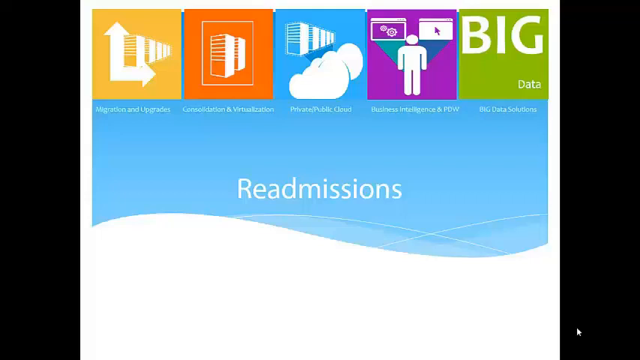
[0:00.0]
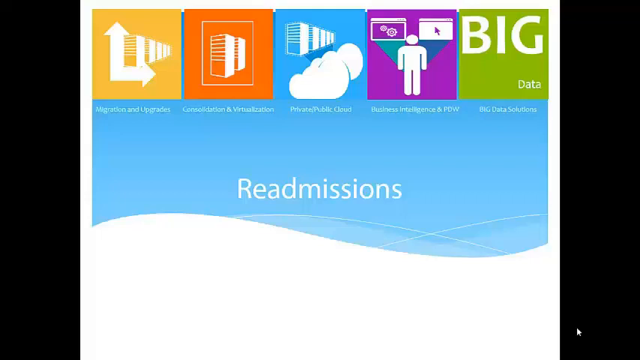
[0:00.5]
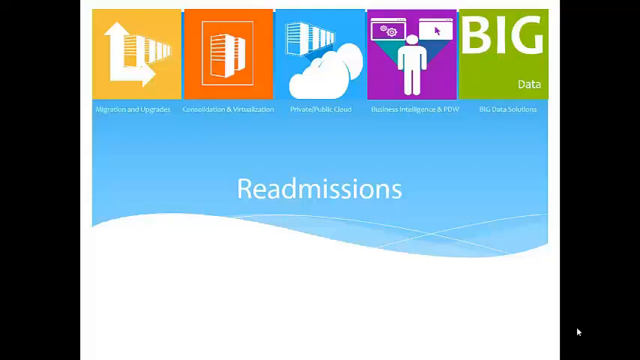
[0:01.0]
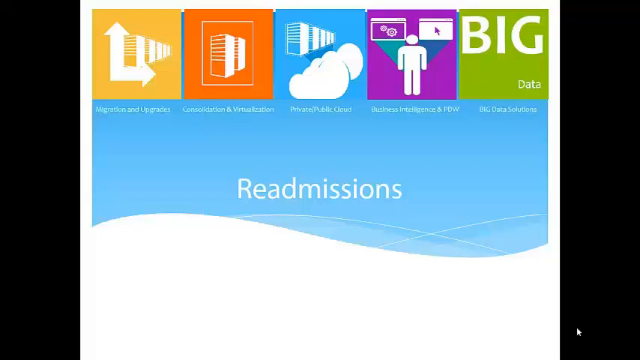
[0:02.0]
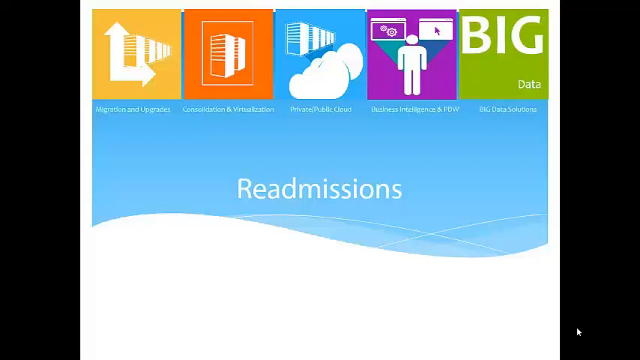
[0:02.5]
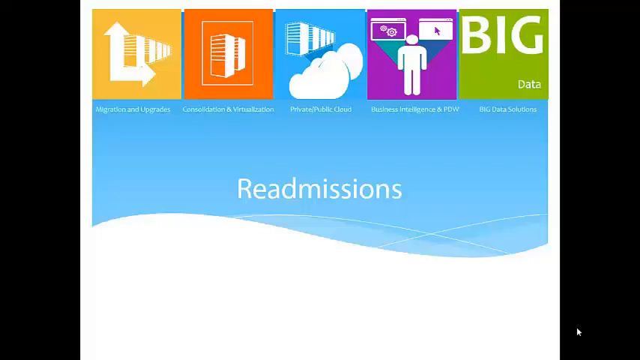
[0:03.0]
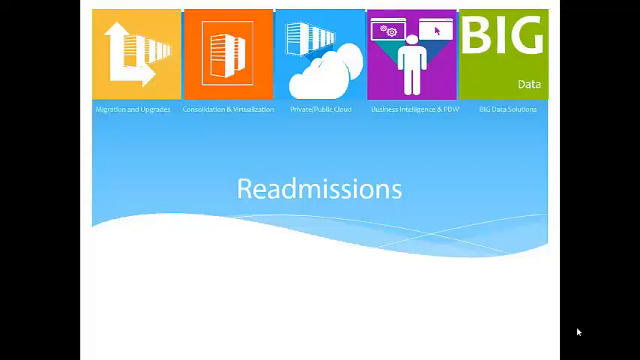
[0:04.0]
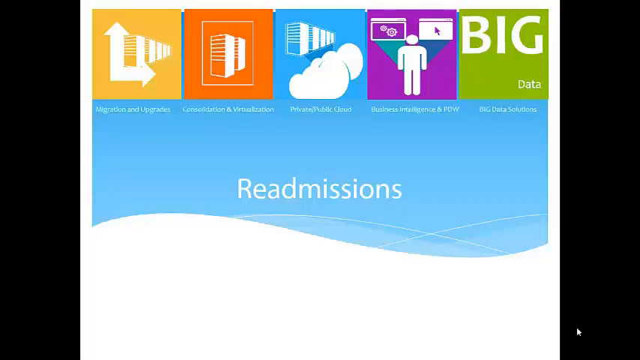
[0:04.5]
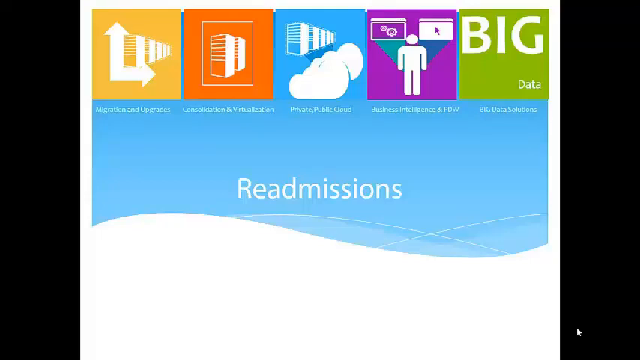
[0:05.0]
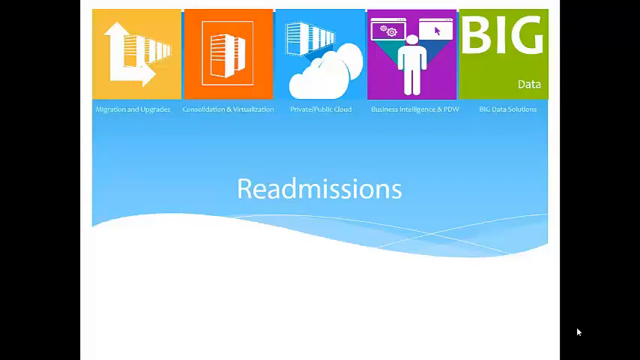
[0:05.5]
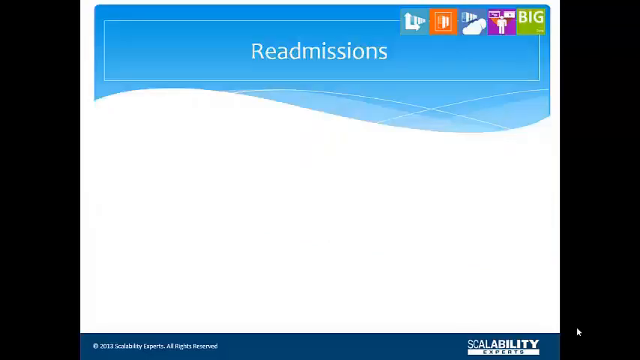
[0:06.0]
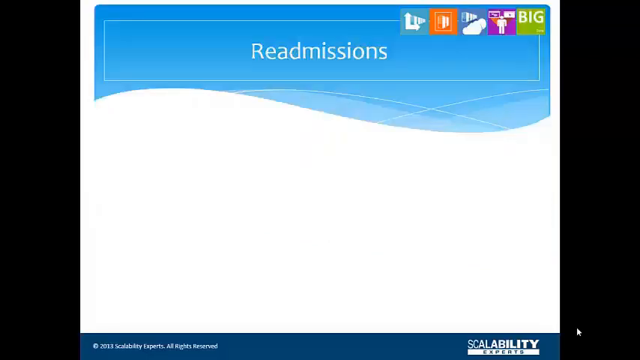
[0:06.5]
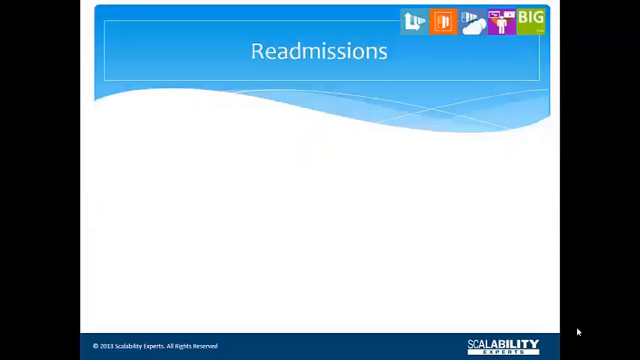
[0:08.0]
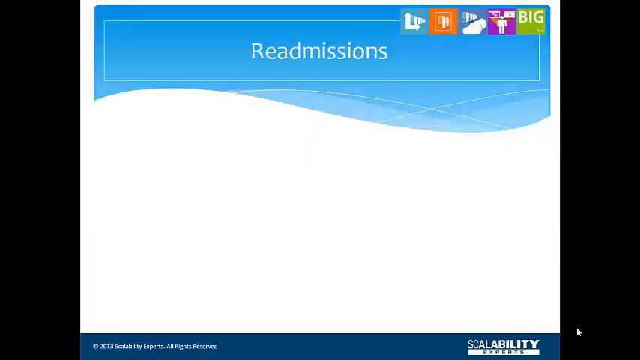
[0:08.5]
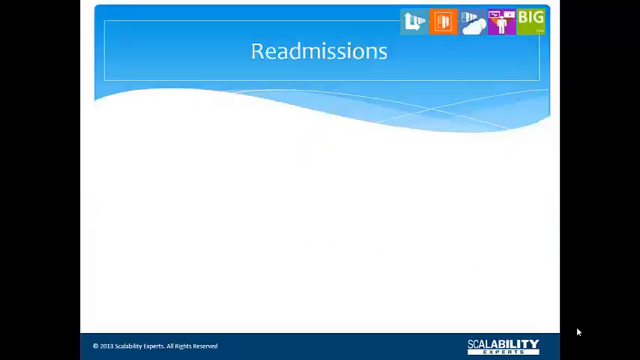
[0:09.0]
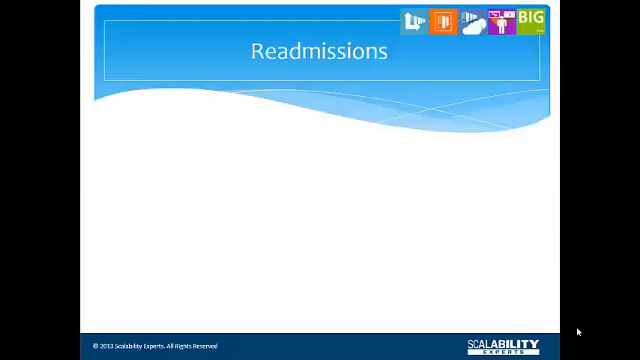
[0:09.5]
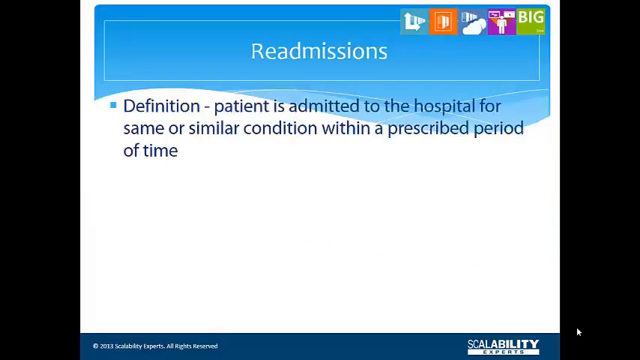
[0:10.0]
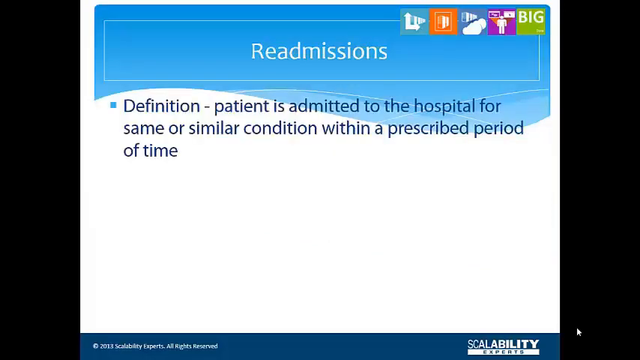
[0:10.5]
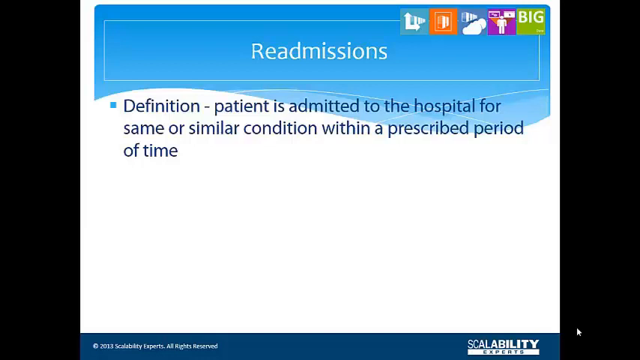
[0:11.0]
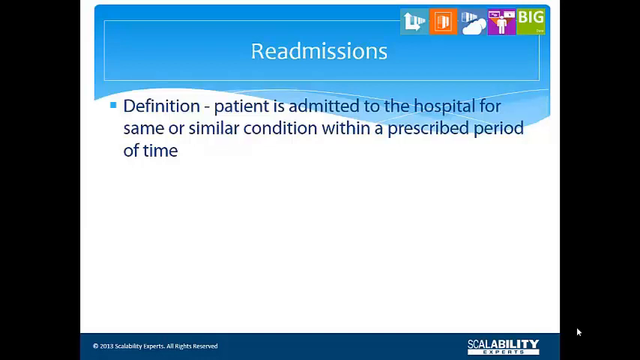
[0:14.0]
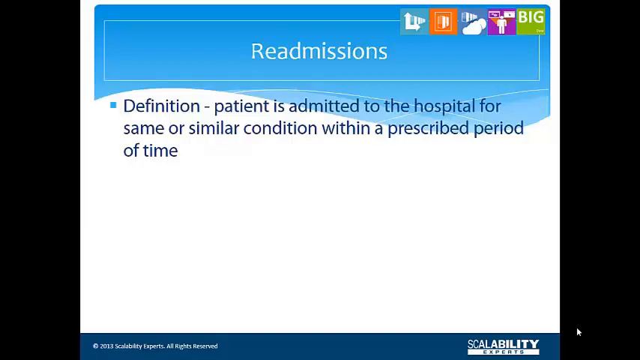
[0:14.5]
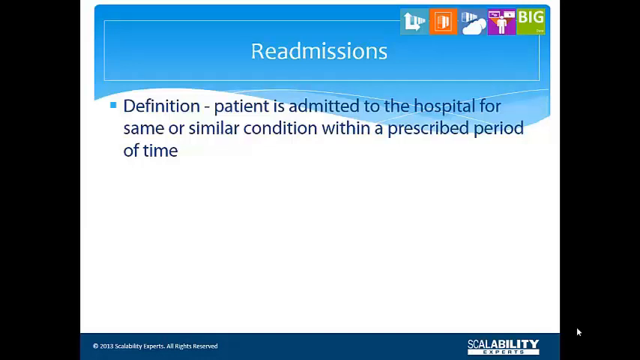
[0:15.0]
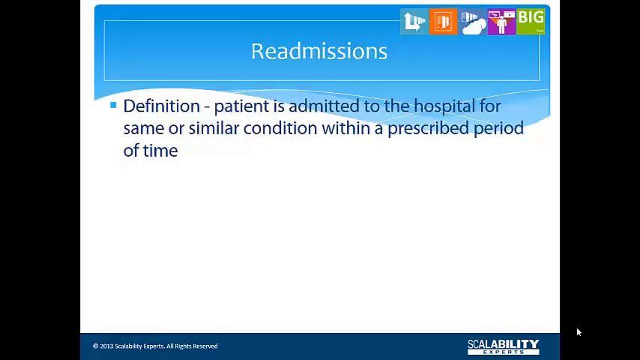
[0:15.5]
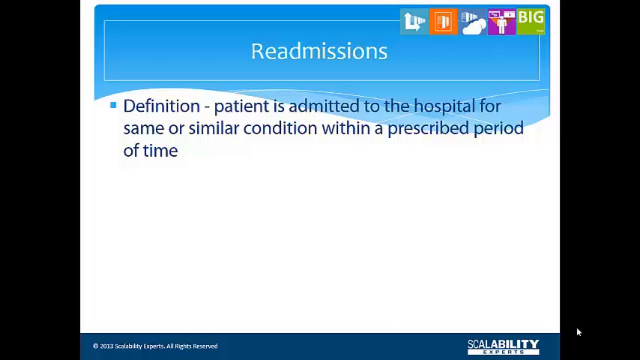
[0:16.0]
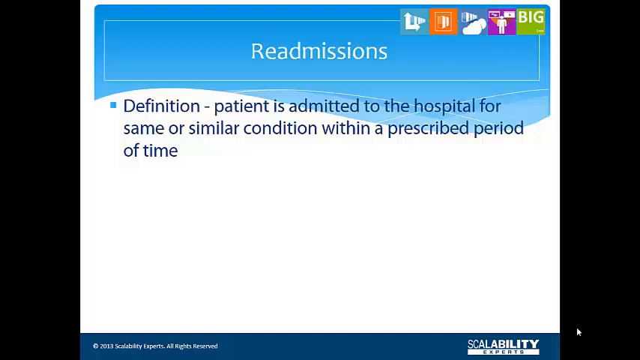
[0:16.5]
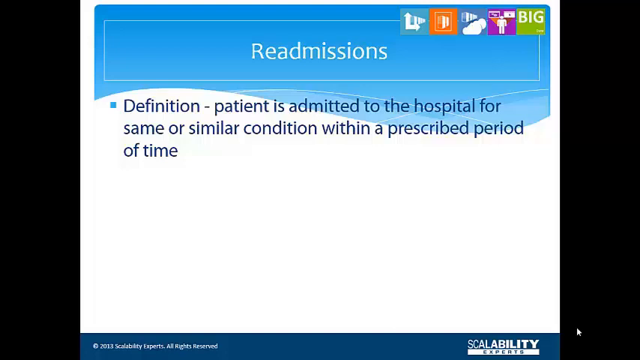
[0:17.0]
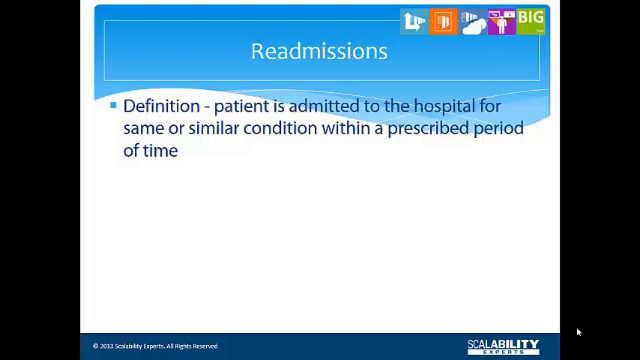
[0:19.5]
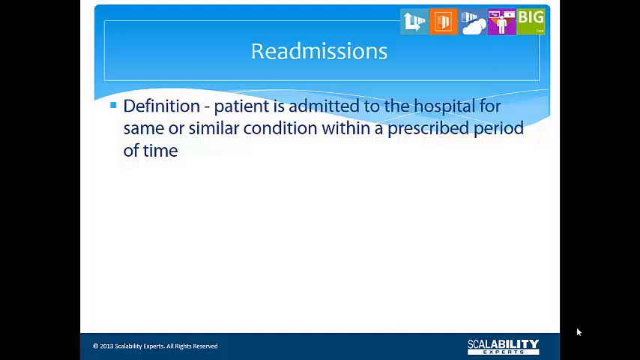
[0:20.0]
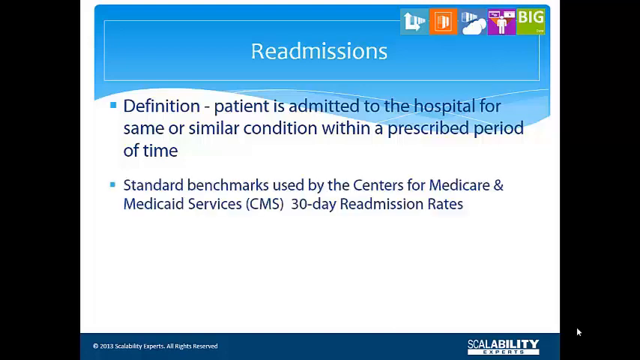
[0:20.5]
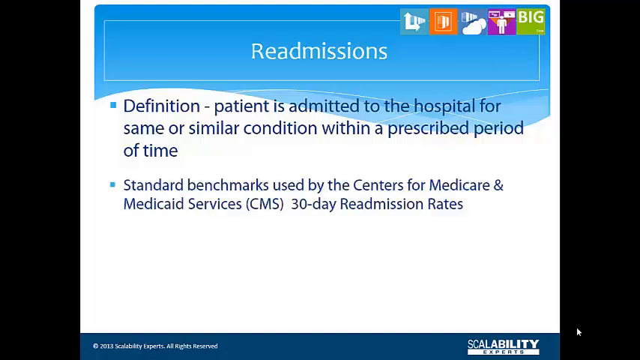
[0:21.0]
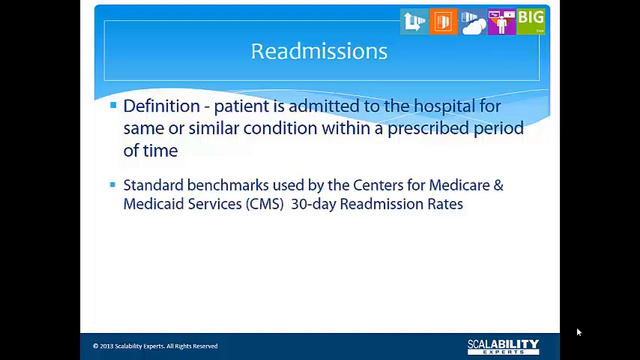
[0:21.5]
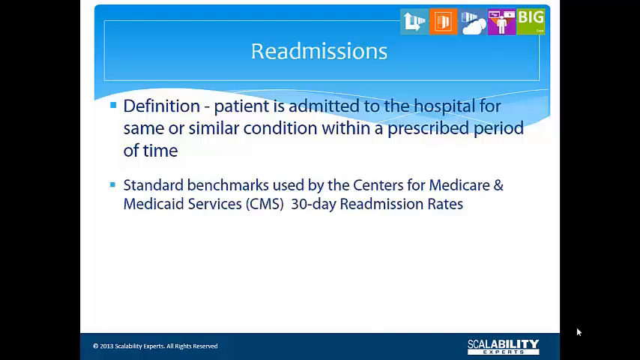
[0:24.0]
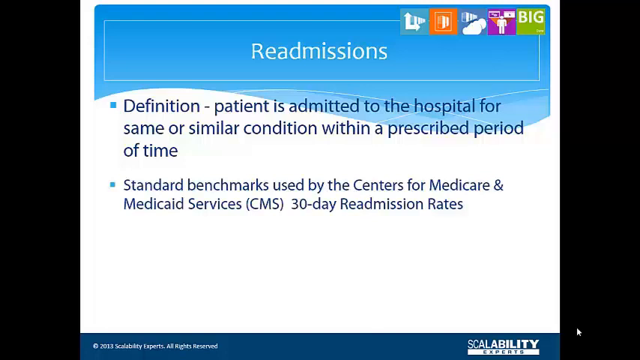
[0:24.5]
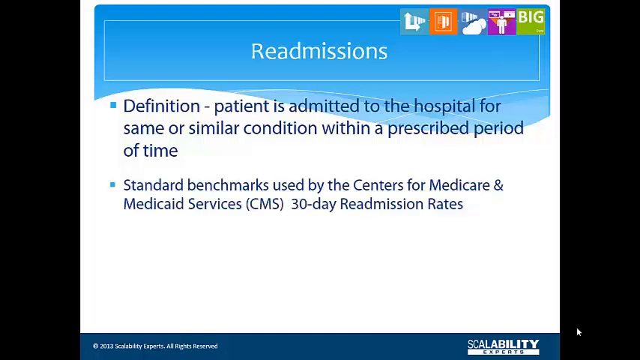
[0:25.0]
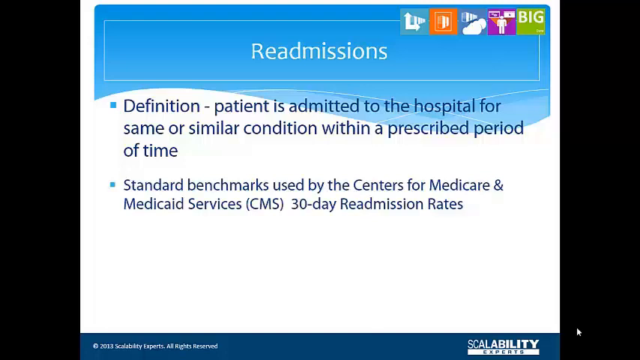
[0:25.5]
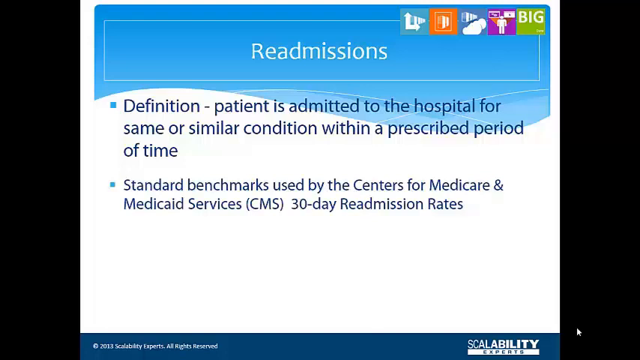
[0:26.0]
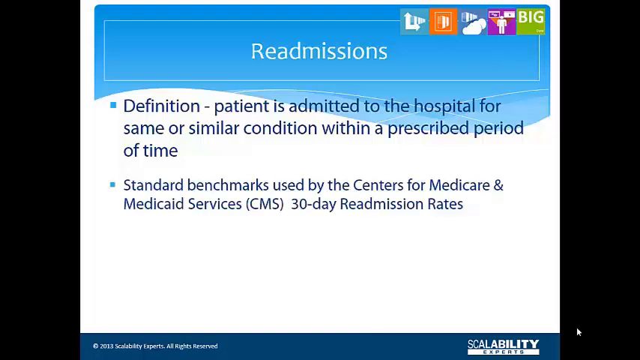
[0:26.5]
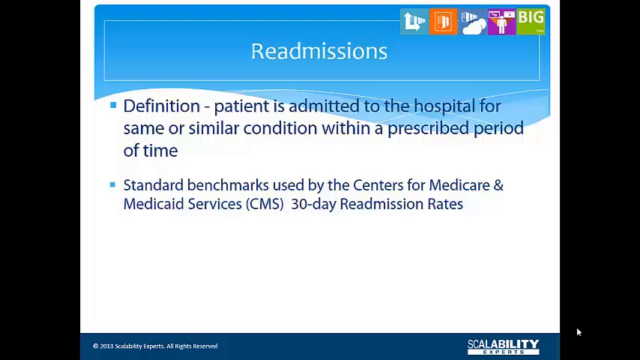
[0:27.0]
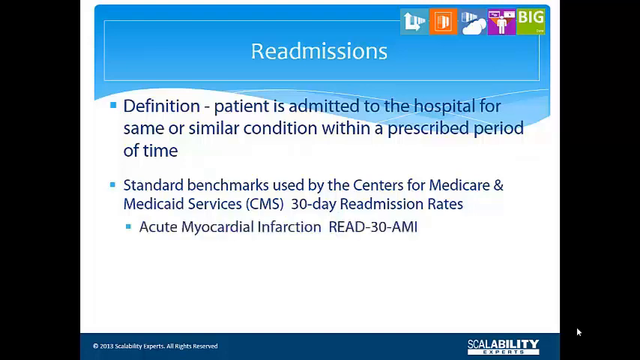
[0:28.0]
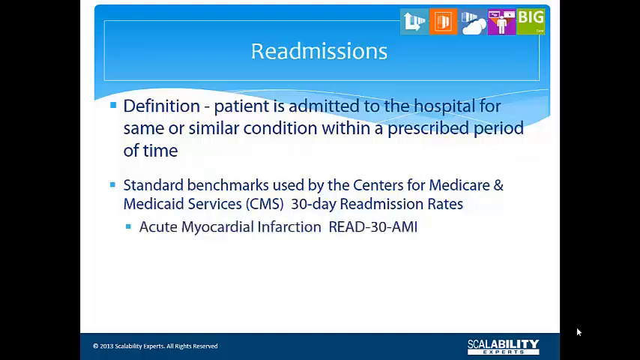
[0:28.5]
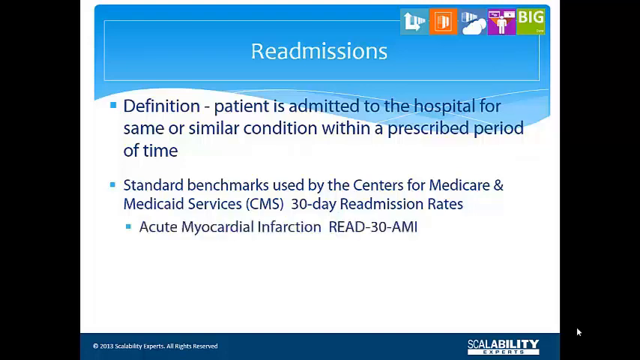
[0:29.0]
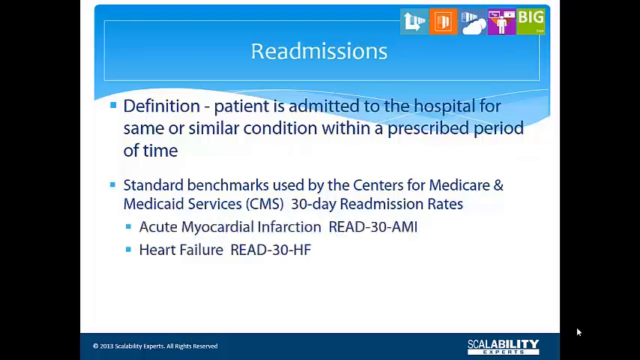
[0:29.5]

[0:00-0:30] A white and blue background shows several icons labeled "migration and updates," "consolidation and virtualization," "private public cloud," "business intelligence and PDW," and "big data solutions." Text in the center of the screen reads "readmissions." It stays on screen for a couple of seconds, then transitions to a mostly white, blank screen with a blue banner bearing the "readmissions" text, with all the icons in the top right corner. Text at the bottom reads "scalability." Blue text pops up reading "definition patient is admitted to the hospital for a same or similar condition within a prescribed period of time." After a couple of seconds more text appears: "standard benchmarks used by the Centers for Medicare and Medicaid Services CMS 30-day readmission rates." A small bullet of sorts then pops up beneath it reading "acute myocardial infarction, read 30 AMI," followed by additional text reading "heart failure."